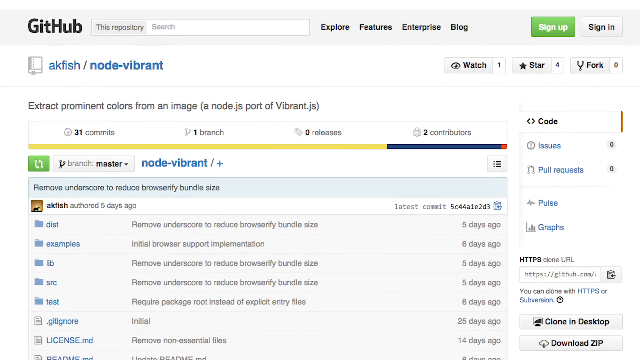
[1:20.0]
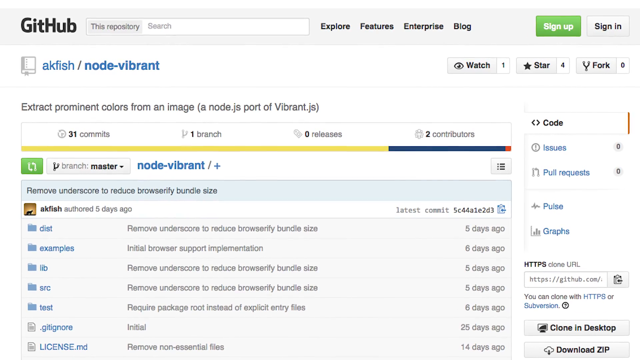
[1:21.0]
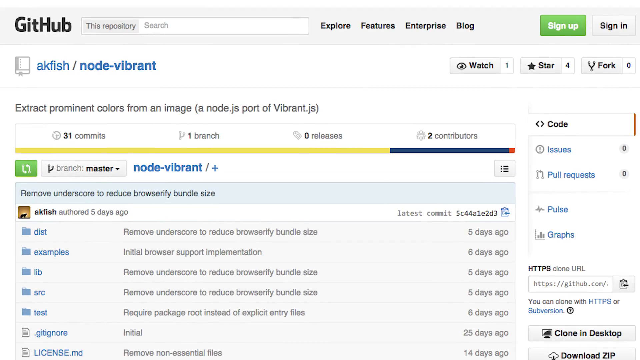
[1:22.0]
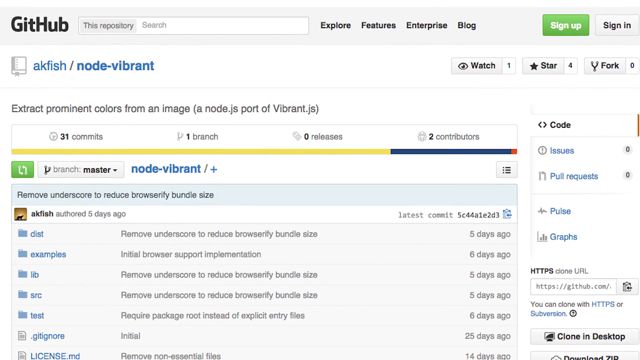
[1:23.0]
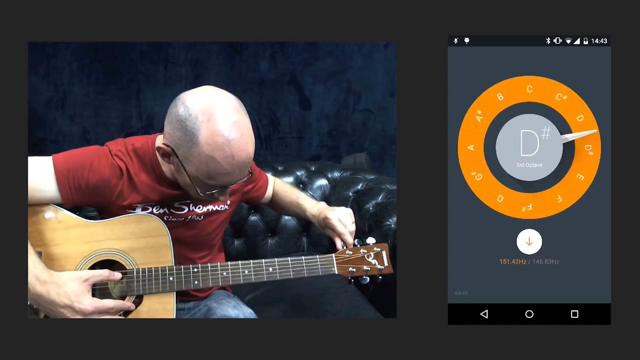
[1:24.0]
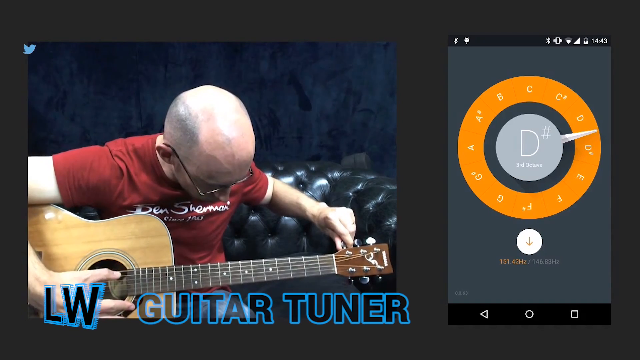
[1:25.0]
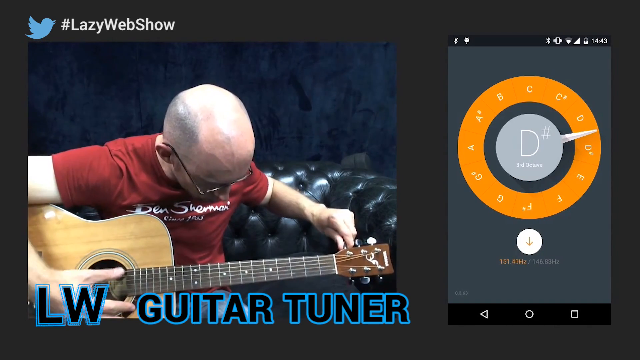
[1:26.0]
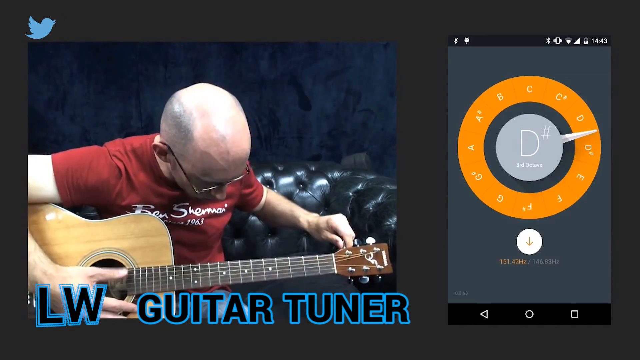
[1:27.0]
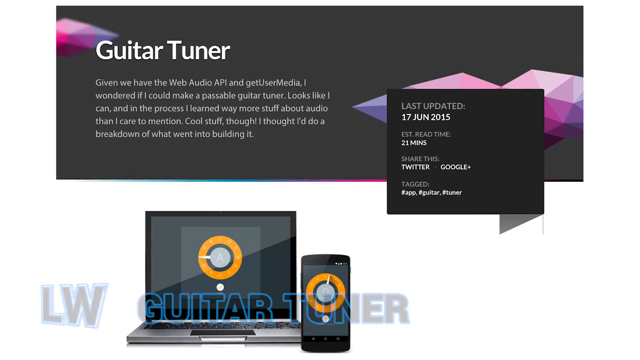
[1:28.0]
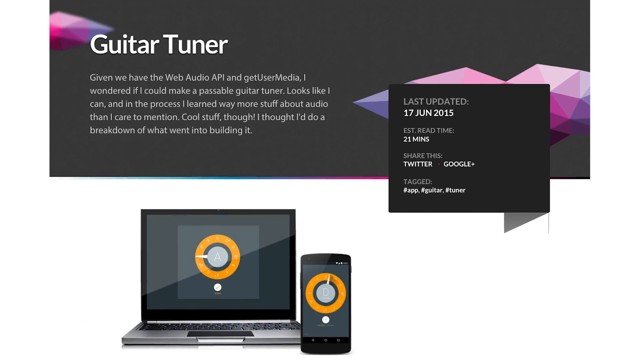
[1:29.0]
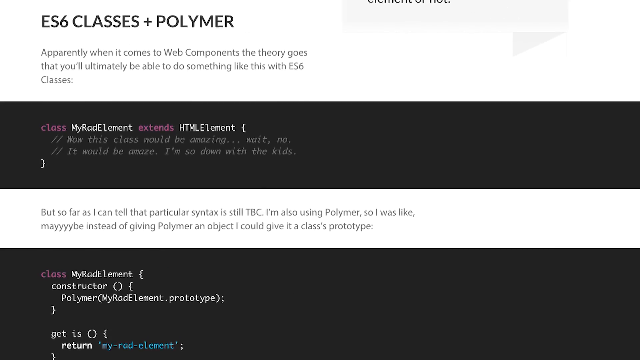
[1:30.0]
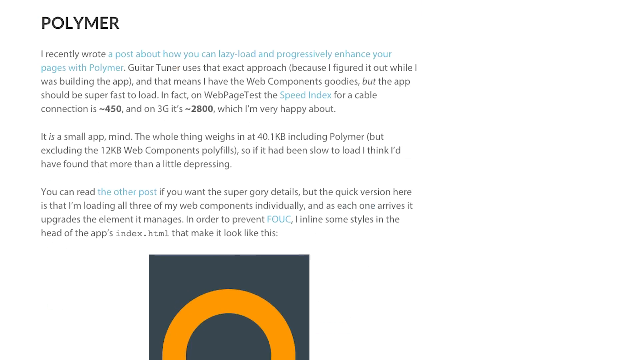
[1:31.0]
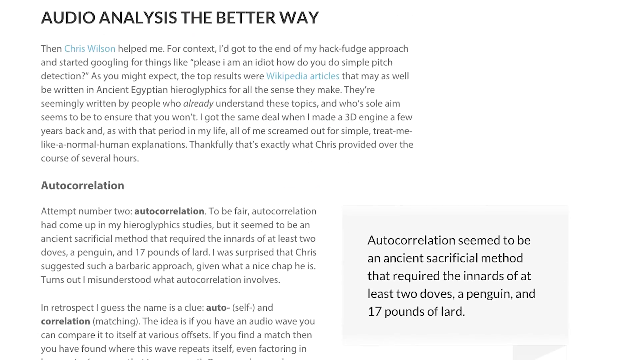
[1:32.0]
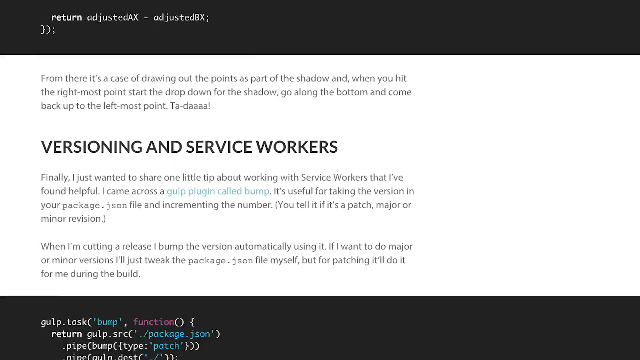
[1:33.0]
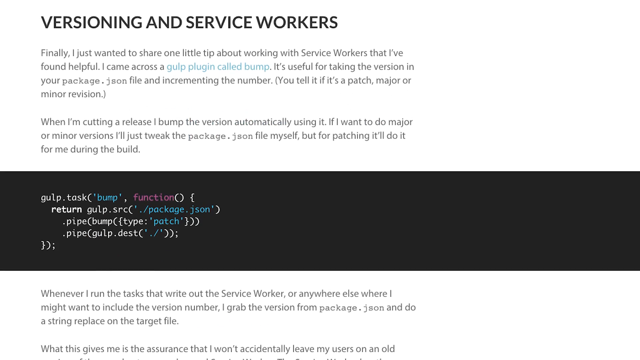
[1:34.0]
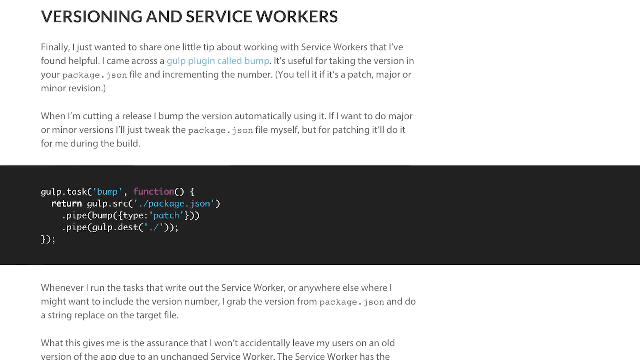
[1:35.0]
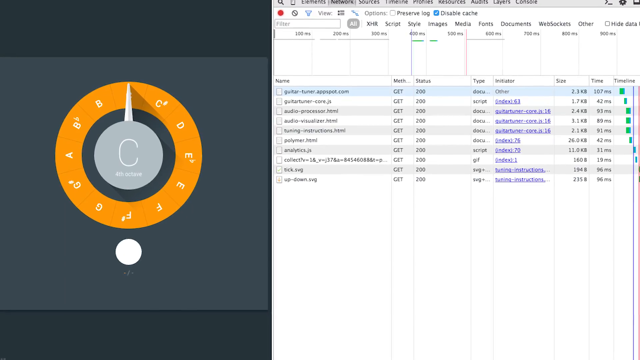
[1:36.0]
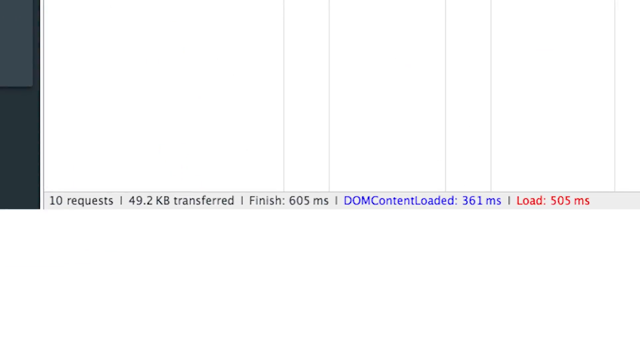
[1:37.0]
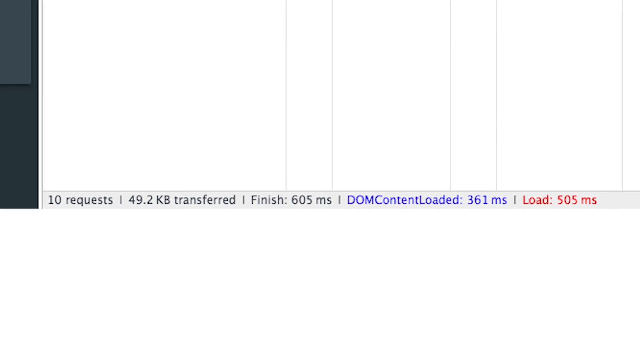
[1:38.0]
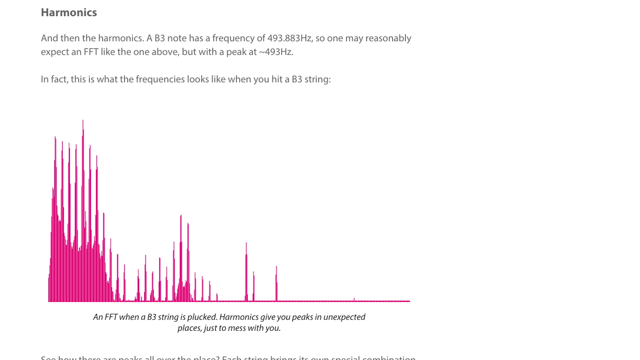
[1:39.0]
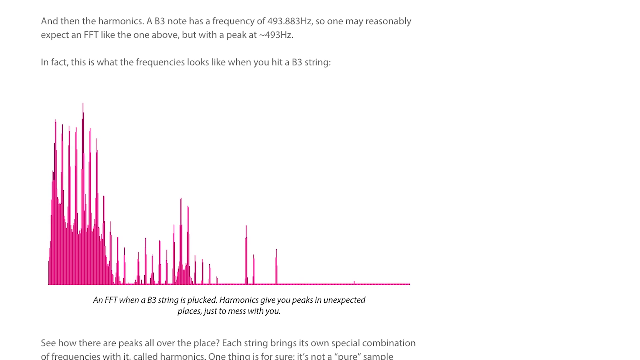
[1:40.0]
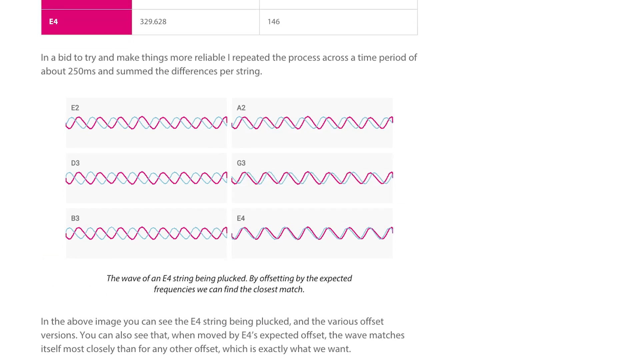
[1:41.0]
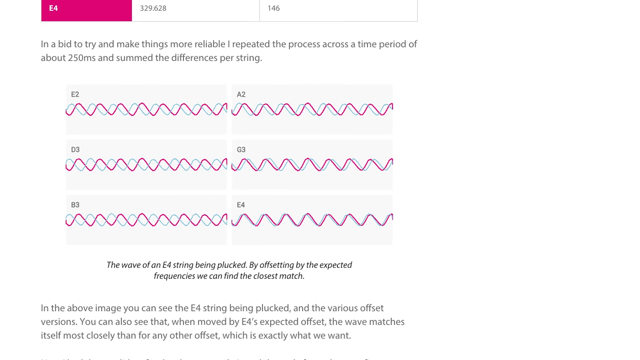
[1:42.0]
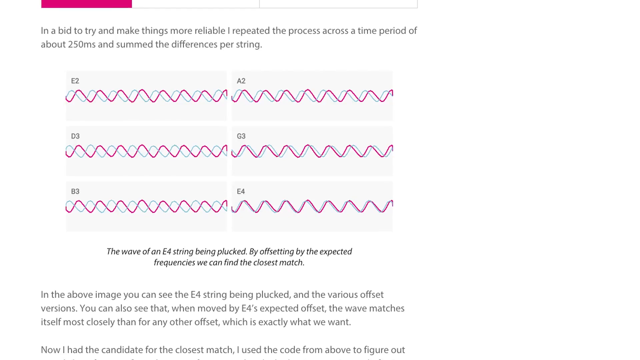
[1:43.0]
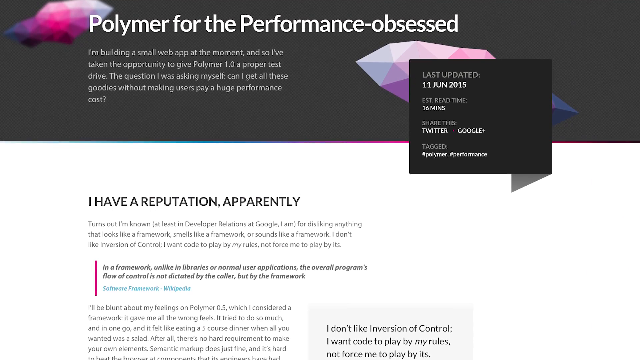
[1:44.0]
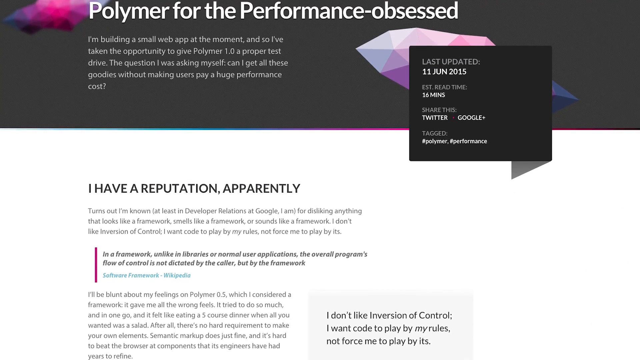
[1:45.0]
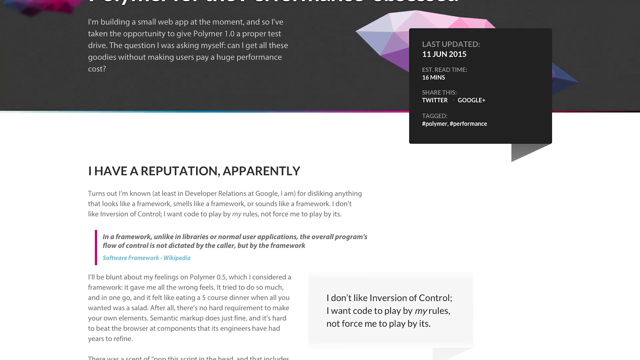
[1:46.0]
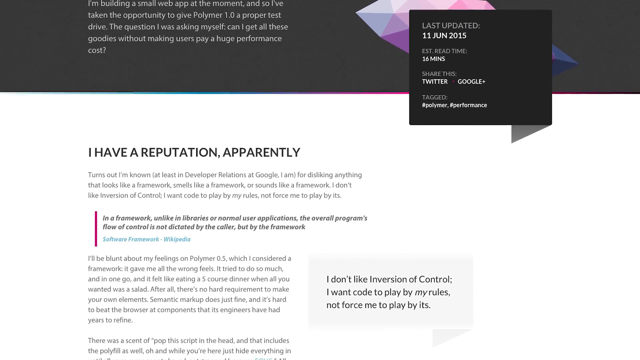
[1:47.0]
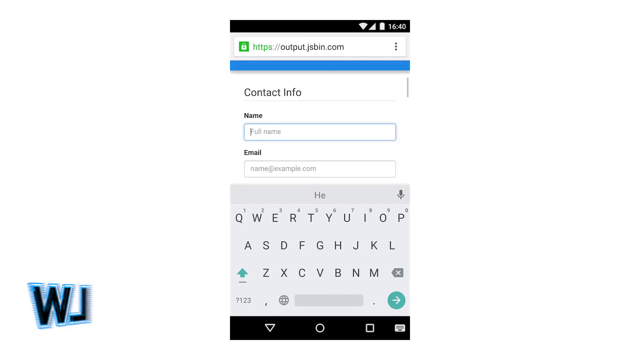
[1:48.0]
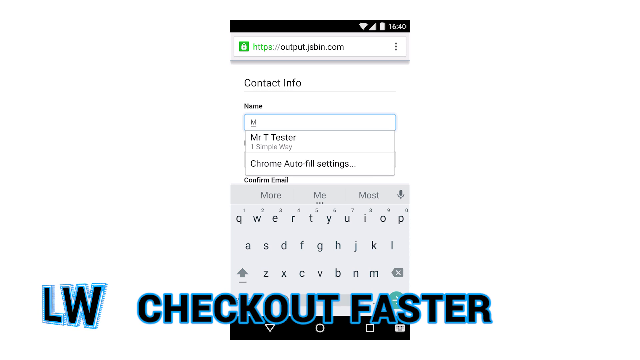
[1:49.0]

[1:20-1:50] The "Extract Prominent Colors from an Image" section has different examples below it. One says "Examples", and next to it is "Initial Browser Support Implementation", from six days ago. At the top, blue text says "Node Viber" with a plus next to it. The video goes back to the split screen of the bald man in a red Ben Sherman t-shirt playing the guitar, with the chords he is playing shown on the right. A page then says "Guitar Tuner. Given we have the Web Audio API and Get User Media, I wondered if I could make a passable guitar tuner. It looks like I can", with code and information below it on how that was done. The video goes back to the tuner, and at the bottom it shows the file size and how much has been transferred, before a web page showing multiple different pieces of information. Then a phone screenshot shows the ad "sign up for parking in the city, the best parking in the world", and the person types their contact info into it.